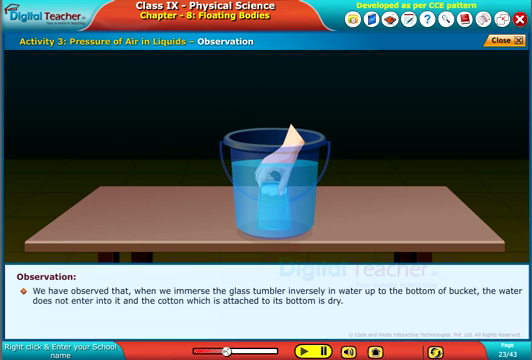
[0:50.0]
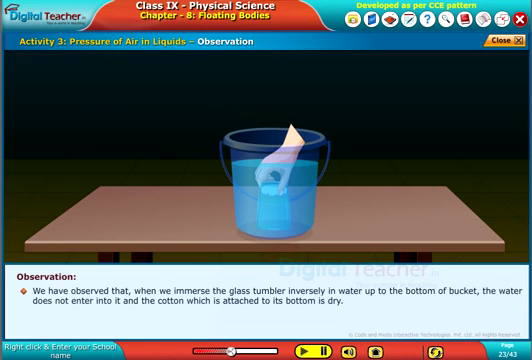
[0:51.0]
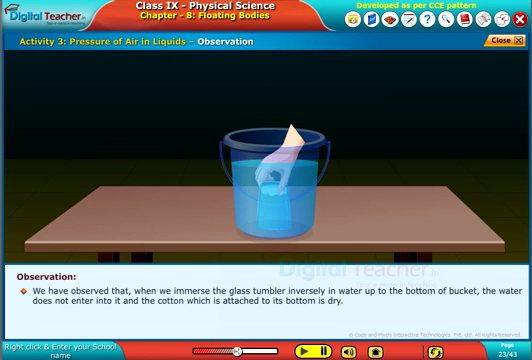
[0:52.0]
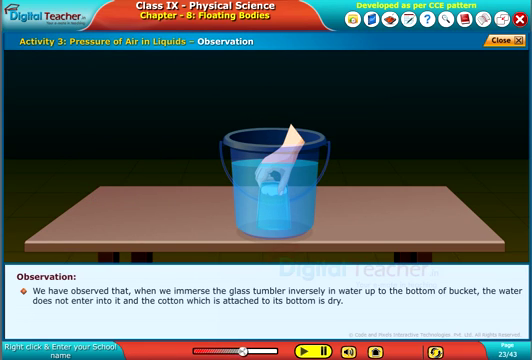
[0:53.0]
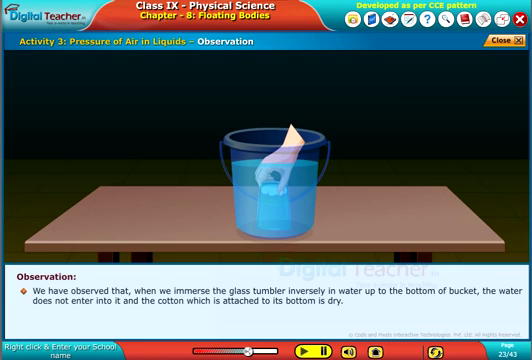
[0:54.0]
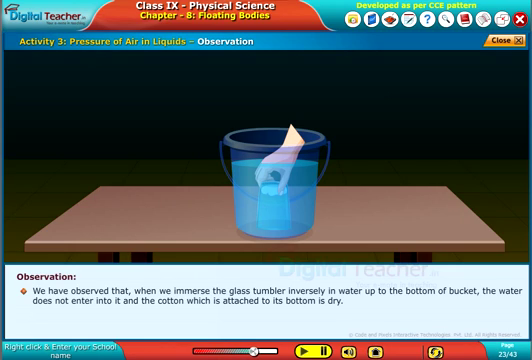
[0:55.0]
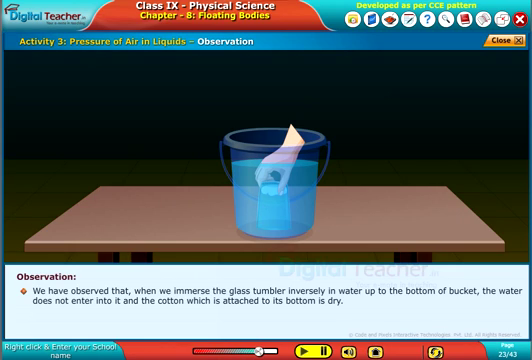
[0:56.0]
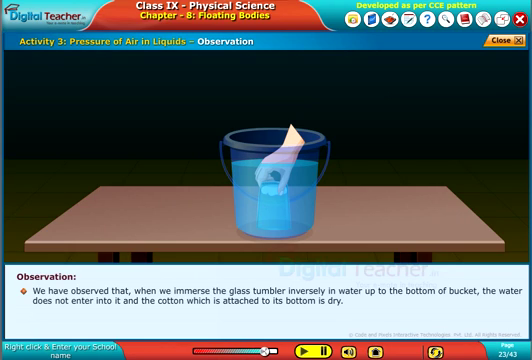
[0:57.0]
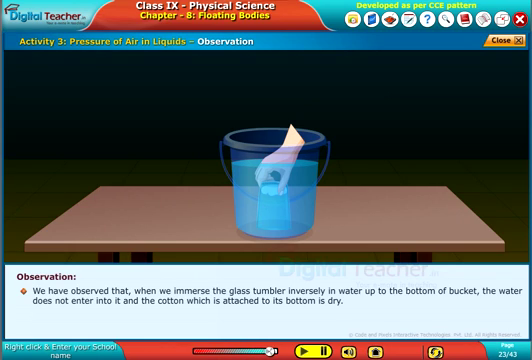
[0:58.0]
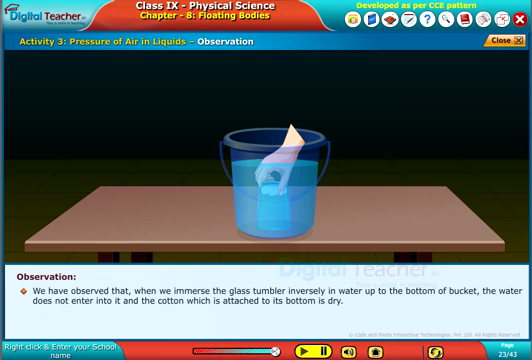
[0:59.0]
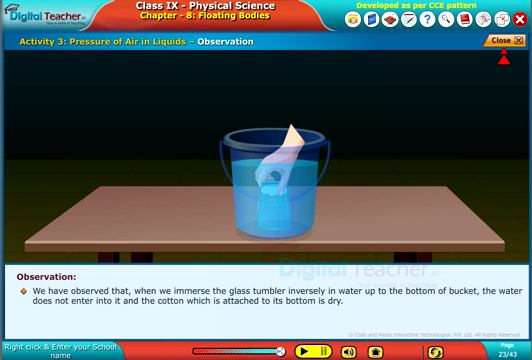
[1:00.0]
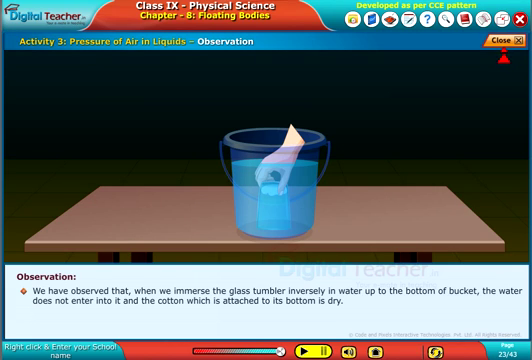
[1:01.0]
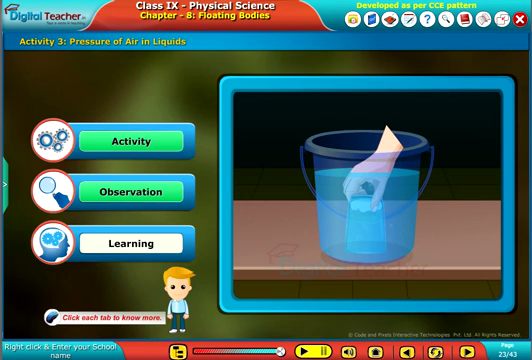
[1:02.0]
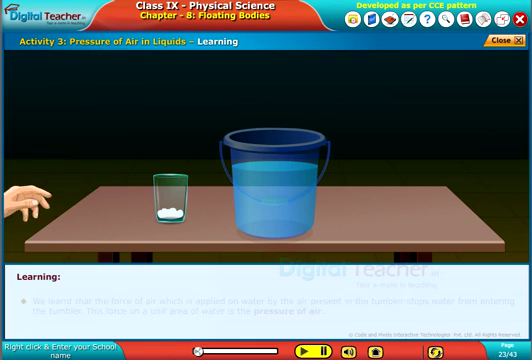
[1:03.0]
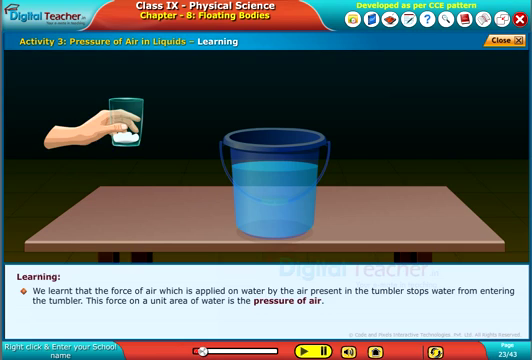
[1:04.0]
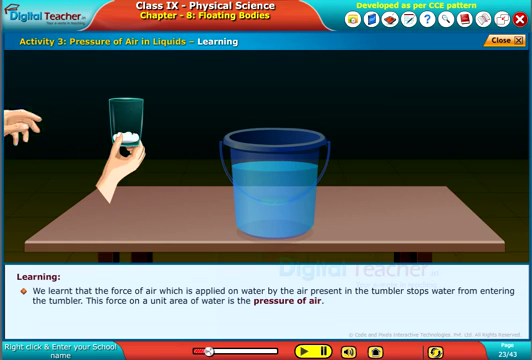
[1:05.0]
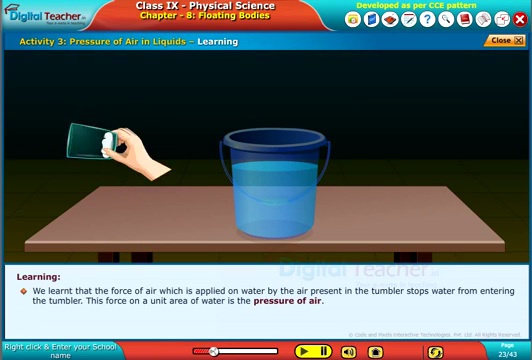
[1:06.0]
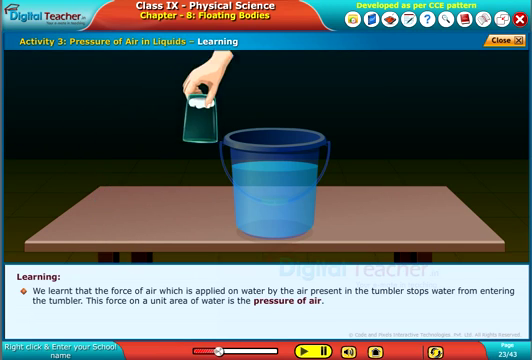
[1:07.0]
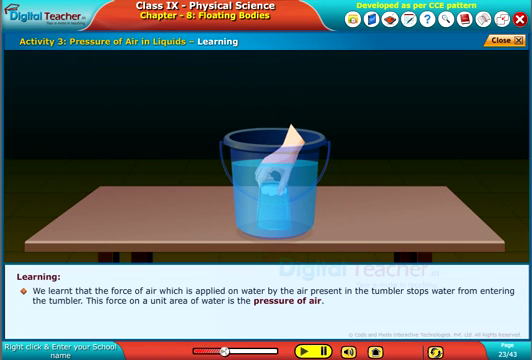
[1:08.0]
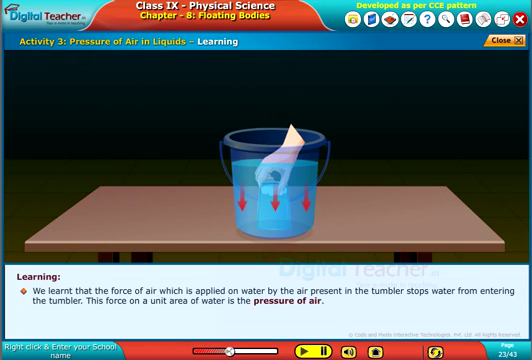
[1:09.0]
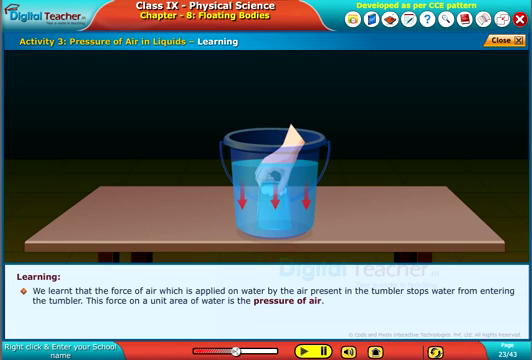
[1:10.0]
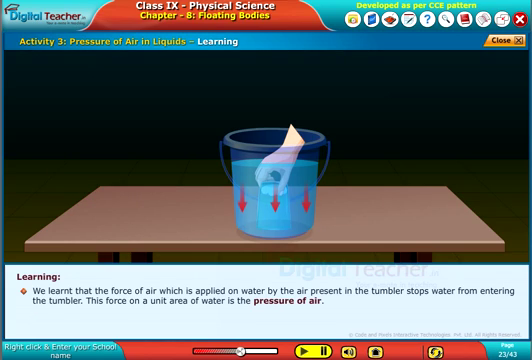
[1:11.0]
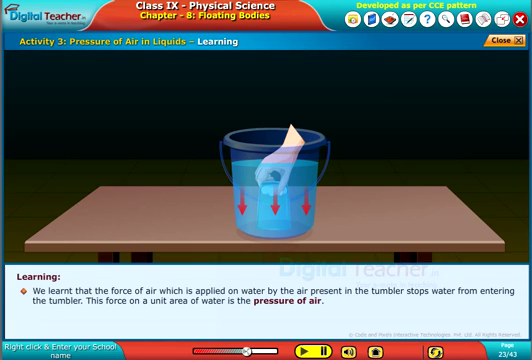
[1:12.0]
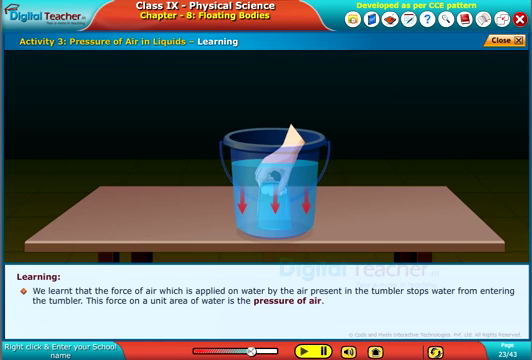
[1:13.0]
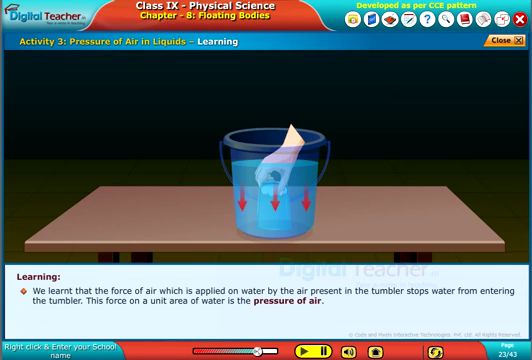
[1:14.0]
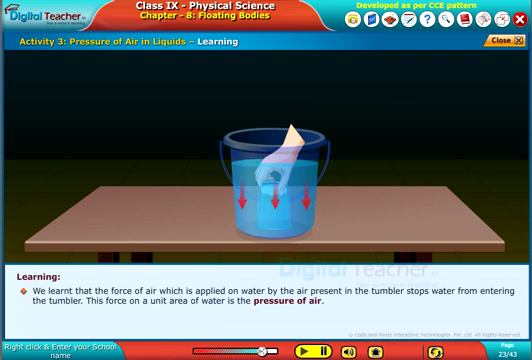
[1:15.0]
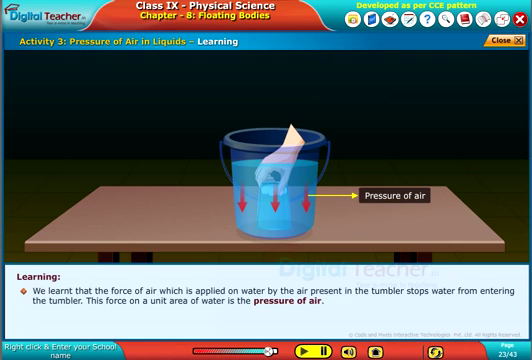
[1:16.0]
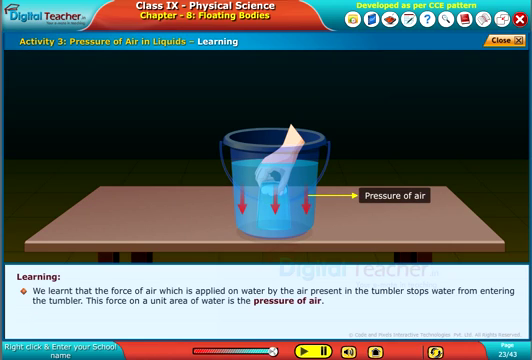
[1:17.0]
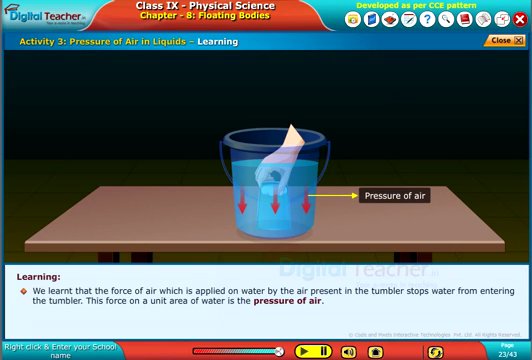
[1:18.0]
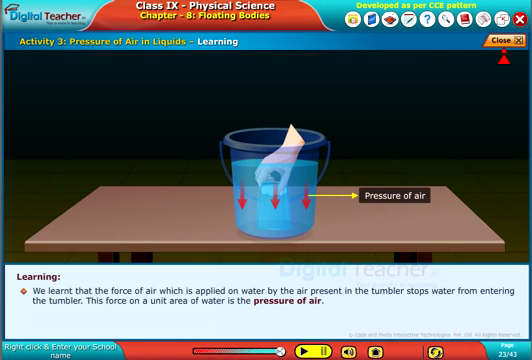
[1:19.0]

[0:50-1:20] The observation screen shows a hand with a glass immersed in water, along with the observation text: when the glass tumbler is immersed in the water at the bottom of the bucket, the water does not enter it, and the cotton attached to the bottom is dry. The view returns to chapter 8, Floating Bodies, where activity and observation are lit green and only learning is not finished. Learning is clicked, leading to the same scene: a hand picks up a glass with cotton and dips it into the water. The learning text reads: "we learned that the force of air which is applied on water by the air present in the tumbler stops water from entering the tumbler. This force on a unit area of water is the pressure of air."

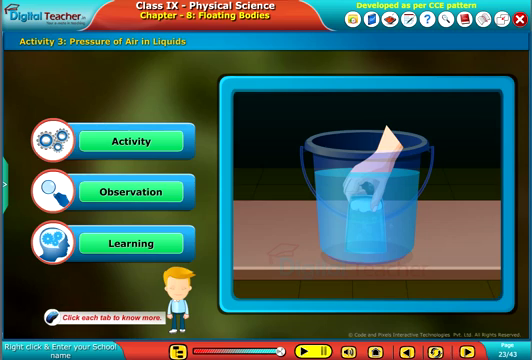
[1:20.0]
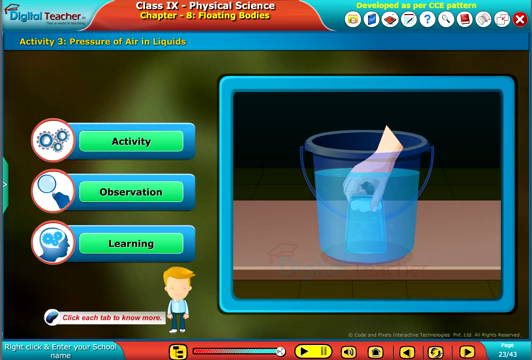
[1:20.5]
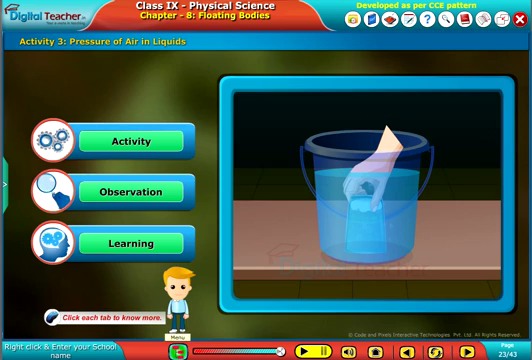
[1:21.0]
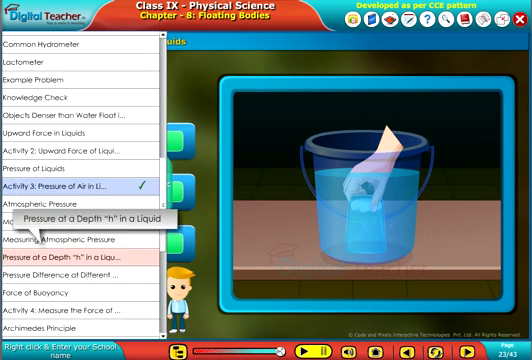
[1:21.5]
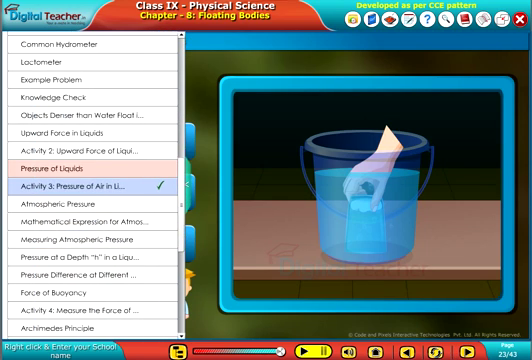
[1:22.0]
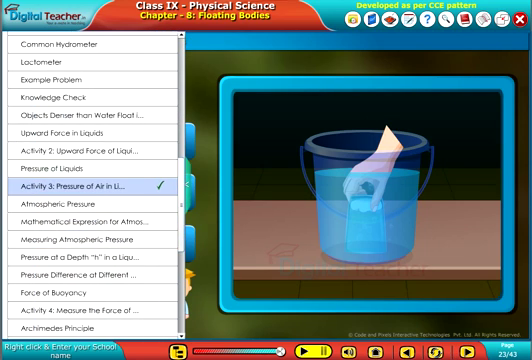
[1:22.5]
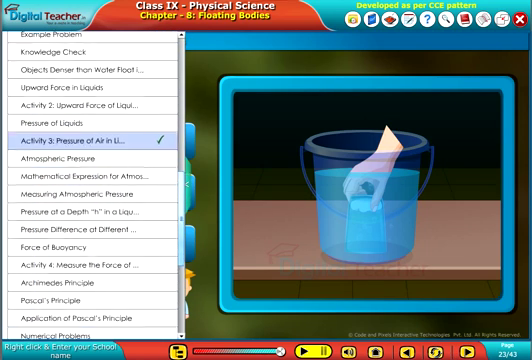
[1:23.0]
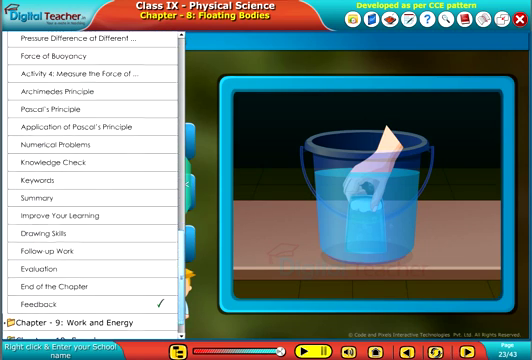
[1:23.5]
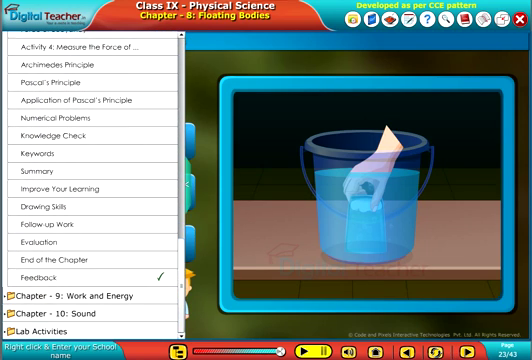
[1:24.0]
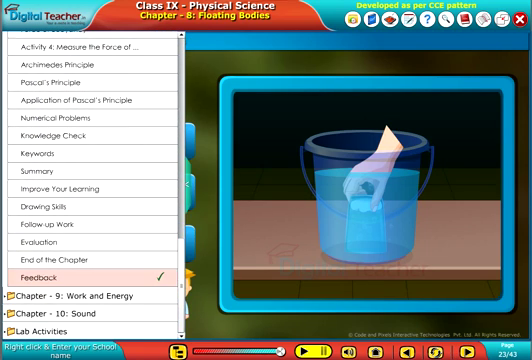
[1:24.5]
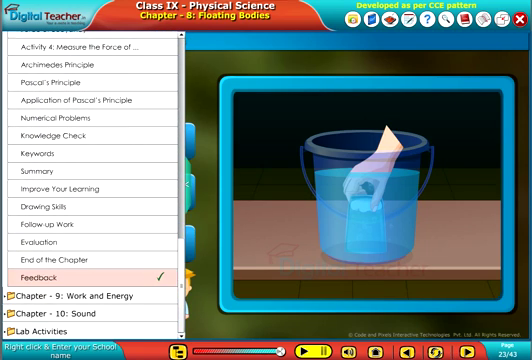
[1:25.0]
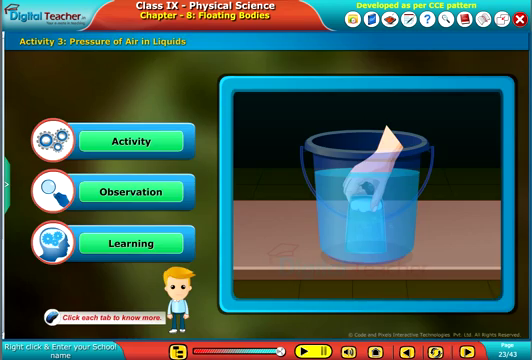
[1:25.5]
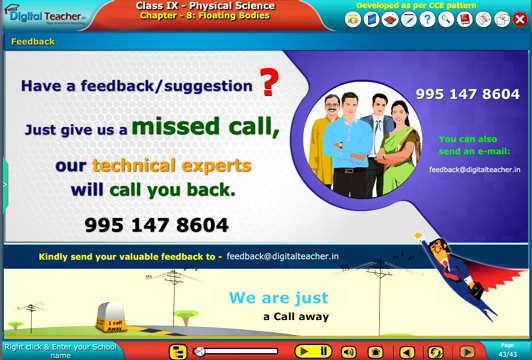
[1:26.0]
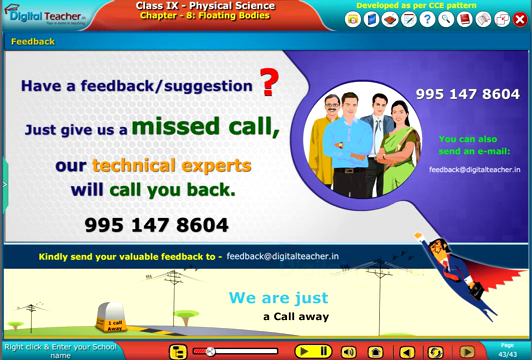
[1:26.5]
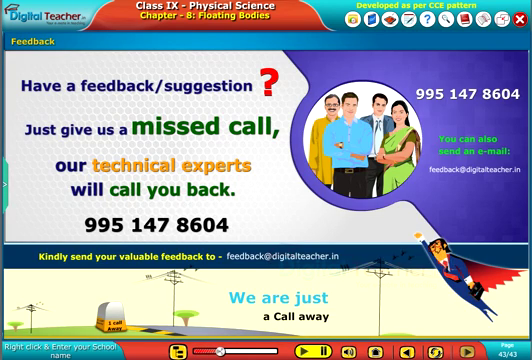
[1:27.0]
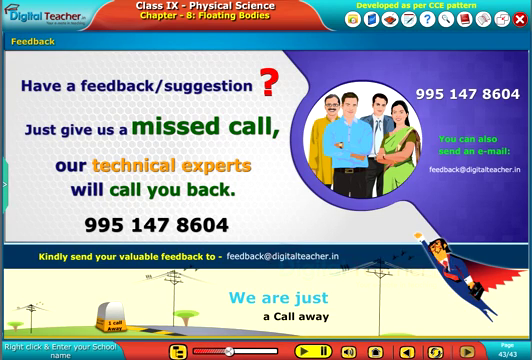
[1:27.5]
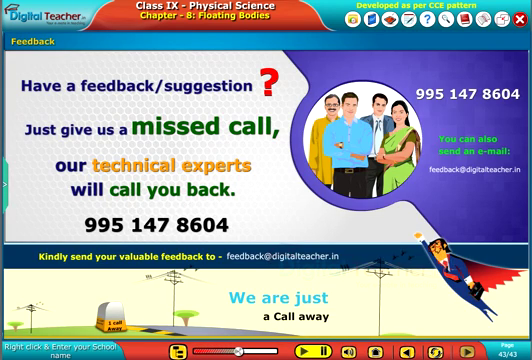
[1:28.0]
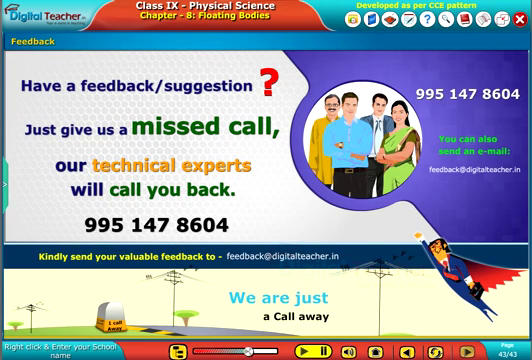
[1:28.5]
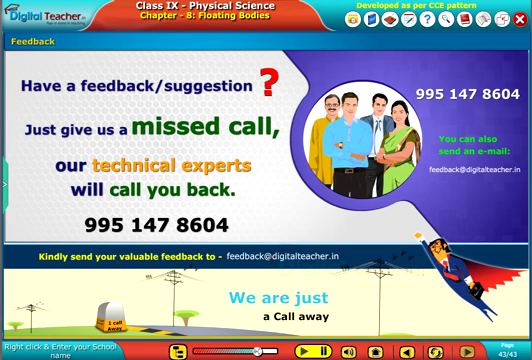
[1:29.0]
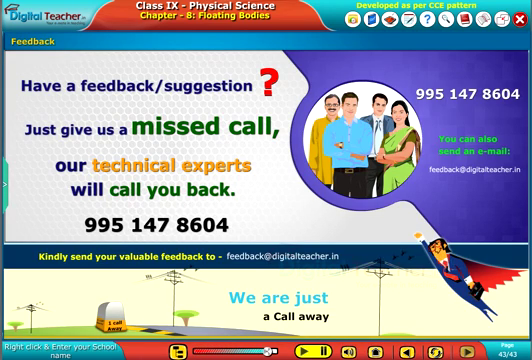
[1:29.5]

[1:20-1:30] All three options are completed: activity, observation and learning are all lit green. At the bottom is a boy with blonde hair, and on the right is the experiment, showing a water bucket and an upside-down glass with cotton in it. The whole list of activities is then selected, the view scrolls down, and feedback is clicked. The feedback screen reads "have a feedback suggestion, just give us a missed call, our technical expert will call you back" with a phone number, and "we are just a call away" with a group of people on the right.